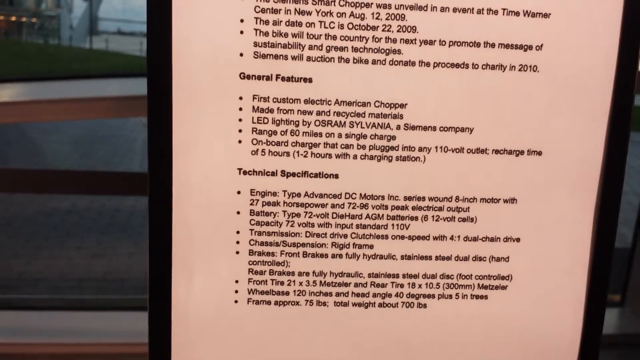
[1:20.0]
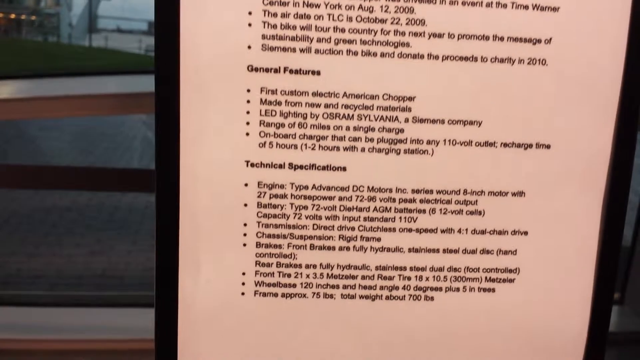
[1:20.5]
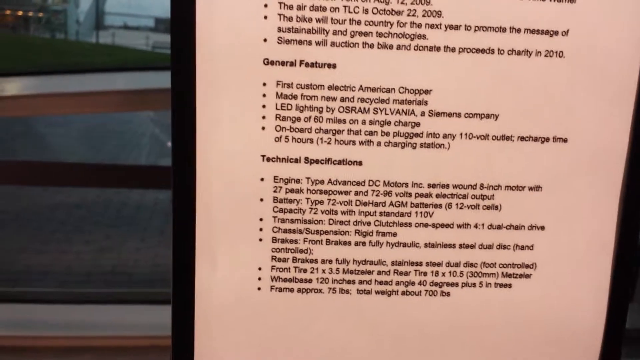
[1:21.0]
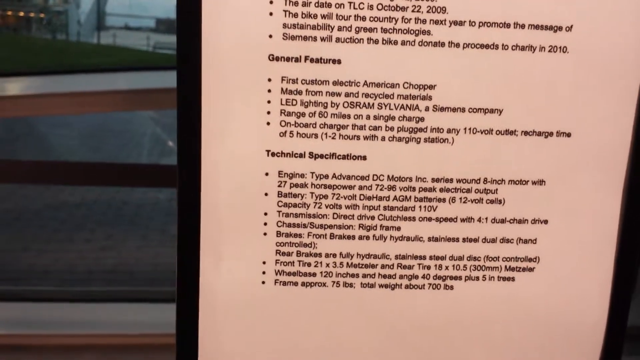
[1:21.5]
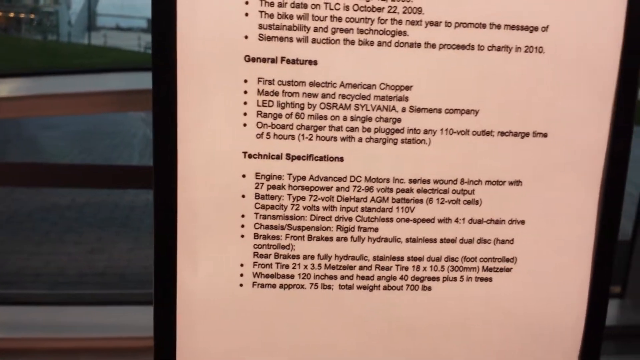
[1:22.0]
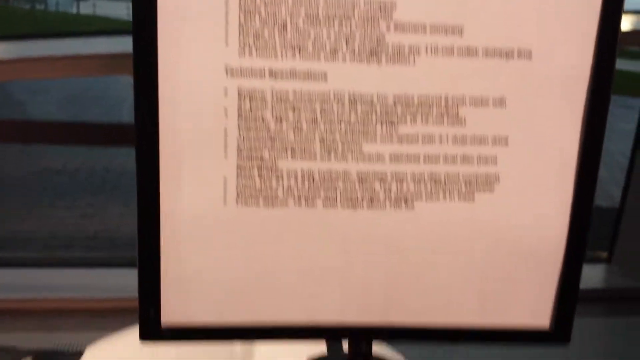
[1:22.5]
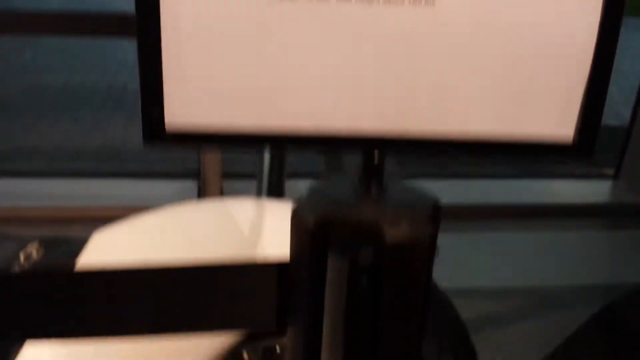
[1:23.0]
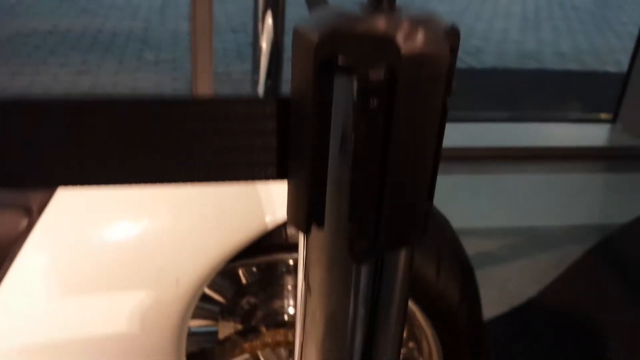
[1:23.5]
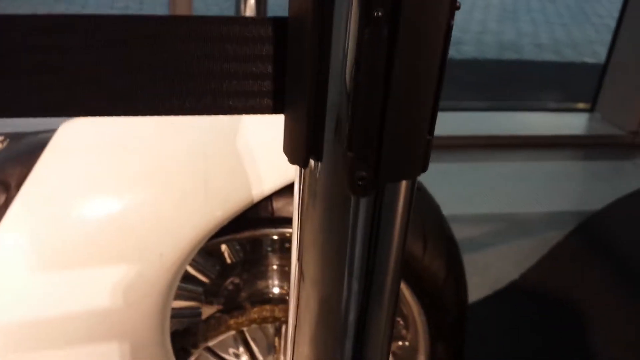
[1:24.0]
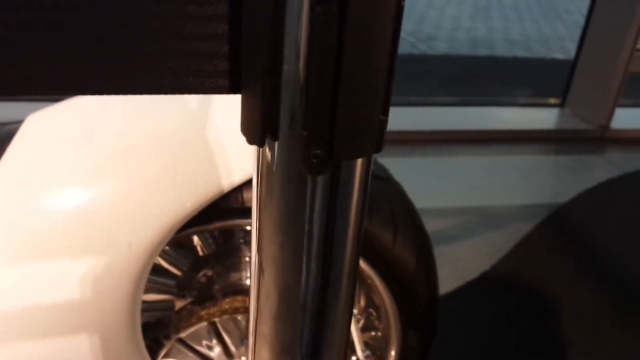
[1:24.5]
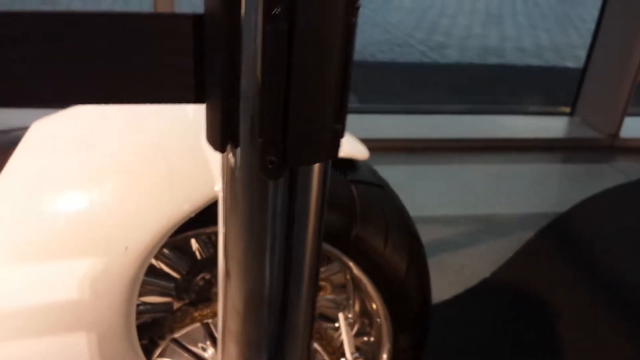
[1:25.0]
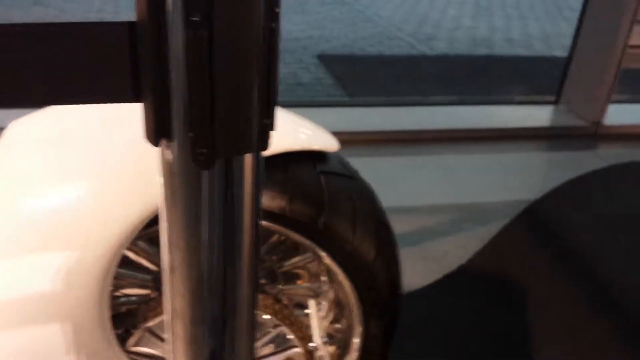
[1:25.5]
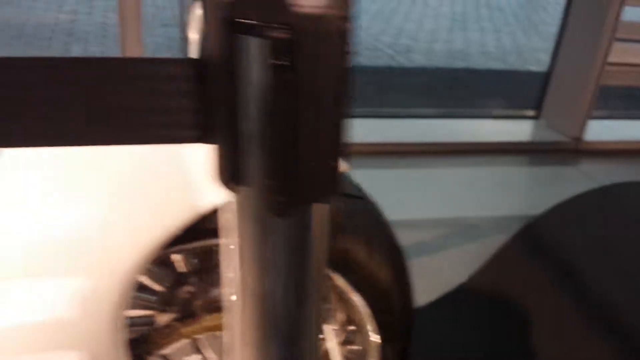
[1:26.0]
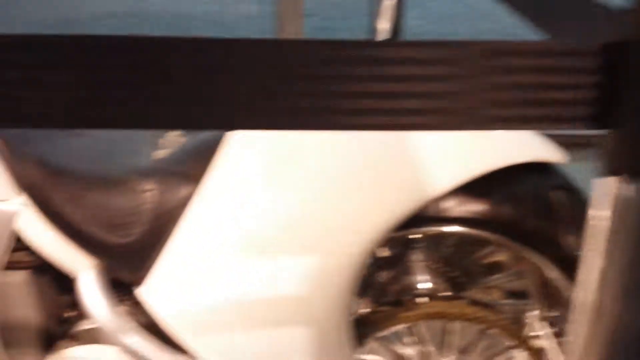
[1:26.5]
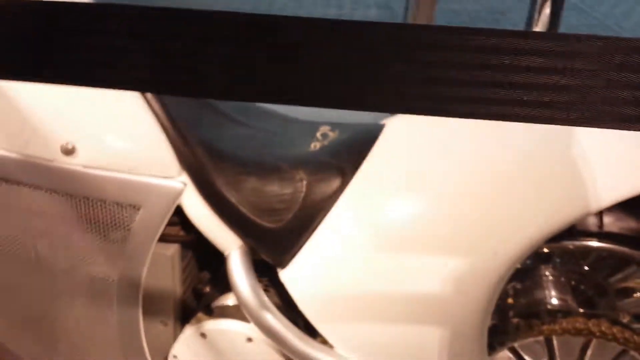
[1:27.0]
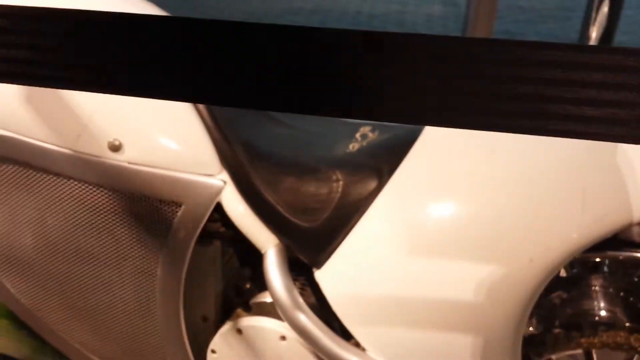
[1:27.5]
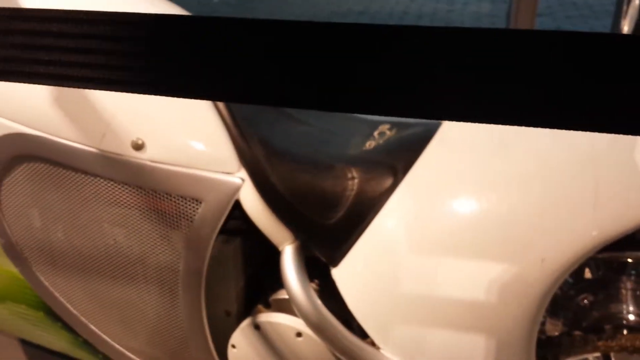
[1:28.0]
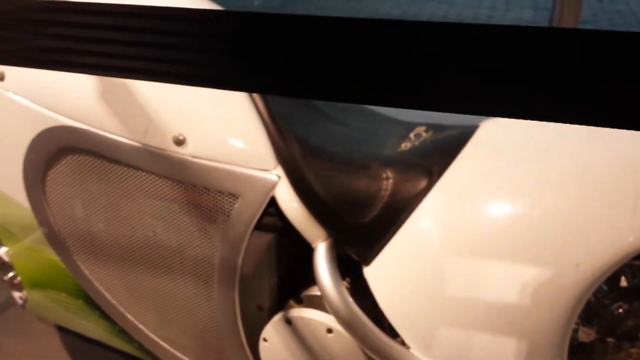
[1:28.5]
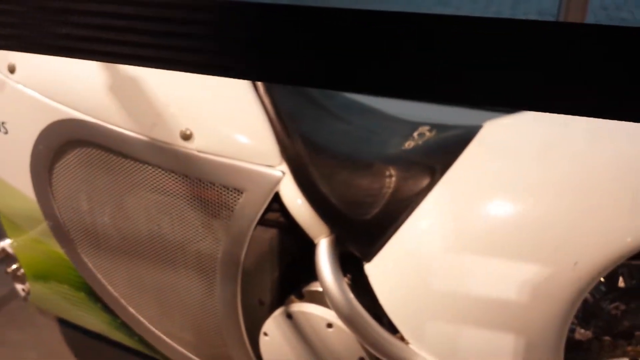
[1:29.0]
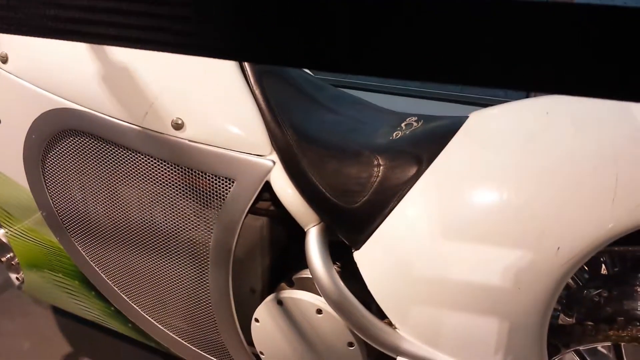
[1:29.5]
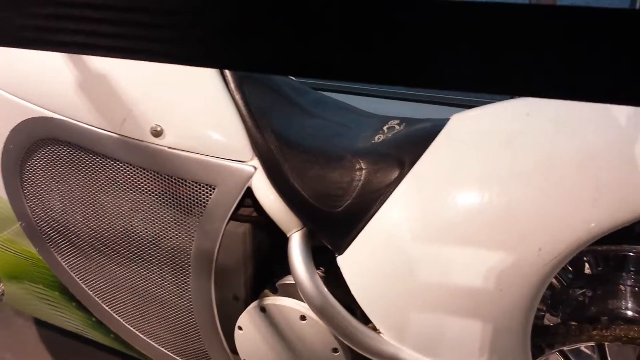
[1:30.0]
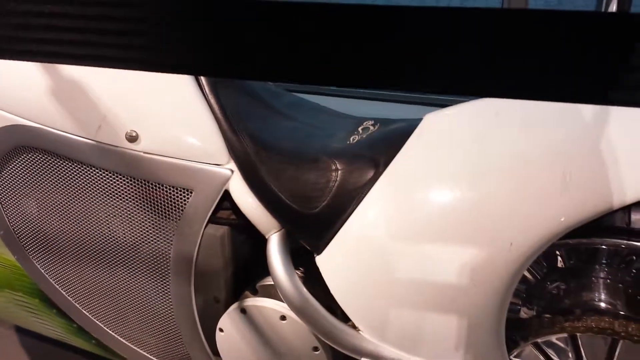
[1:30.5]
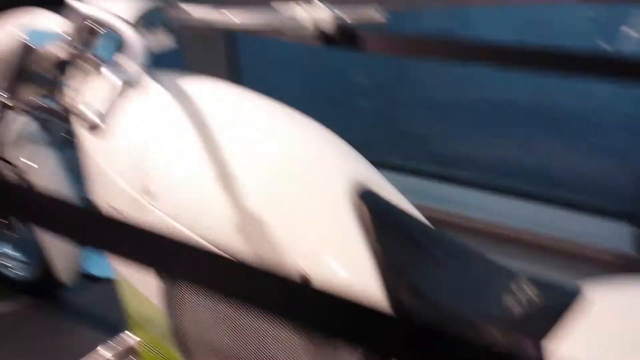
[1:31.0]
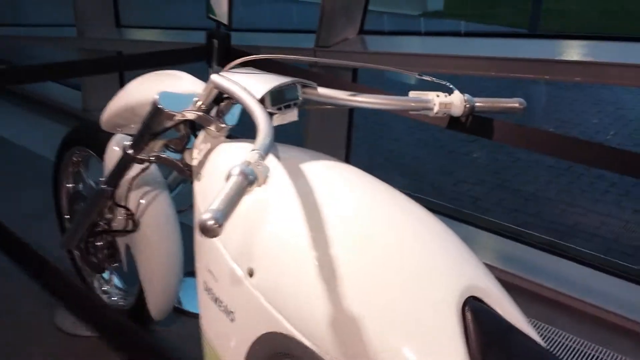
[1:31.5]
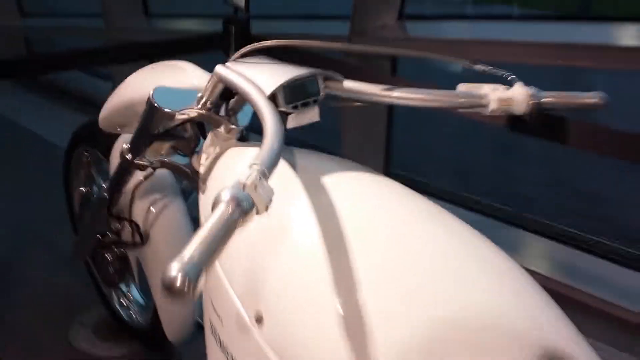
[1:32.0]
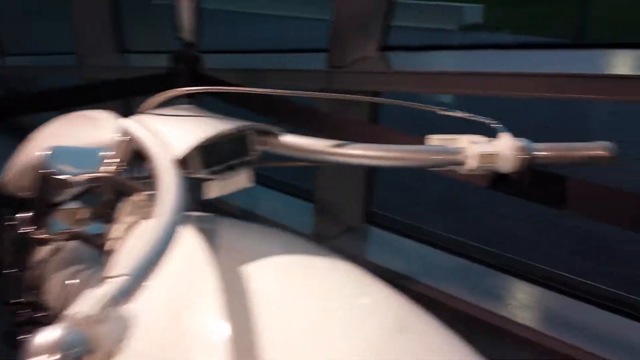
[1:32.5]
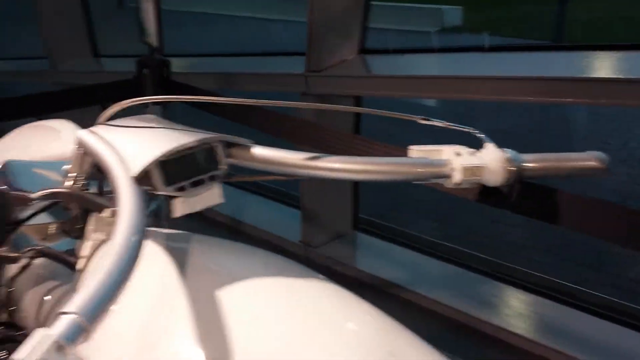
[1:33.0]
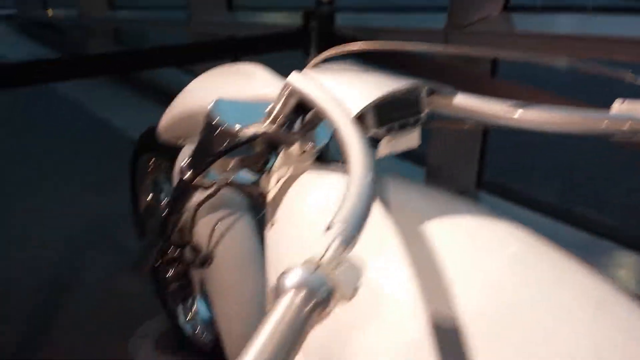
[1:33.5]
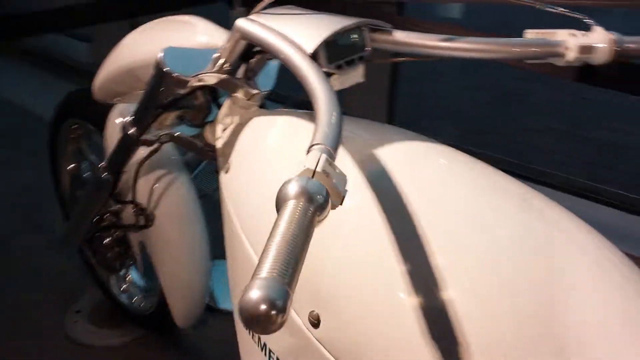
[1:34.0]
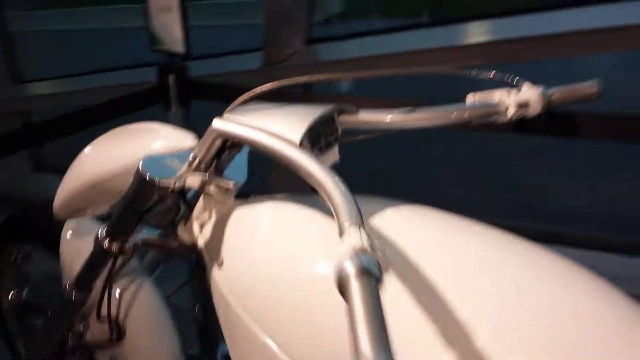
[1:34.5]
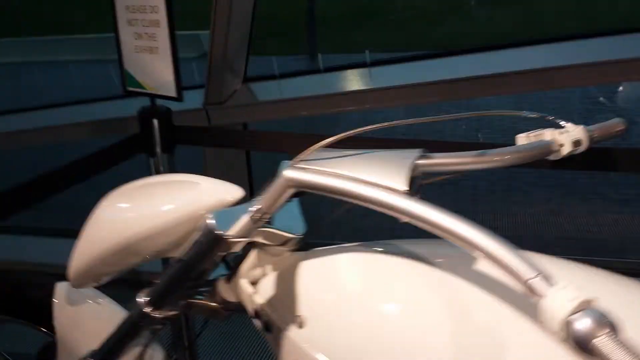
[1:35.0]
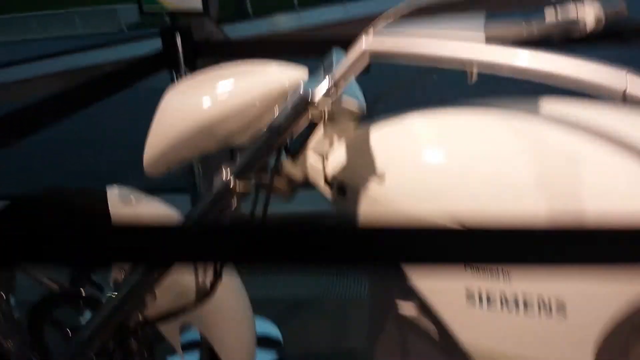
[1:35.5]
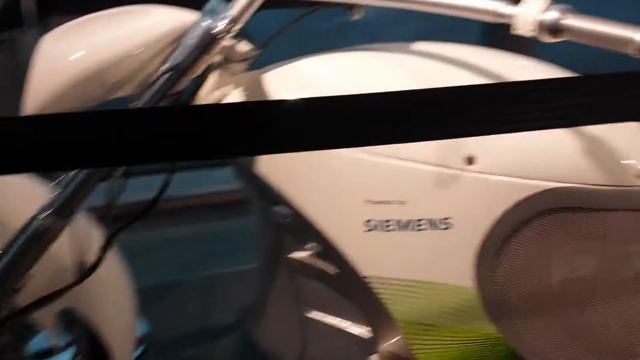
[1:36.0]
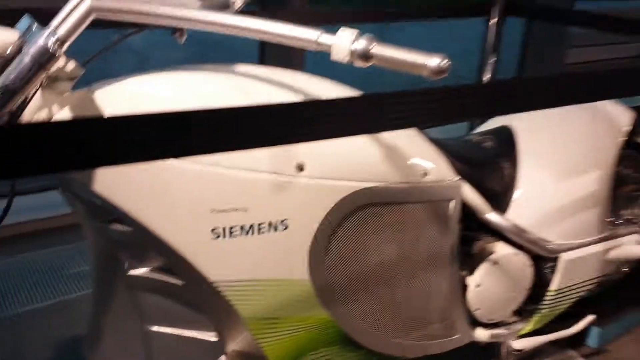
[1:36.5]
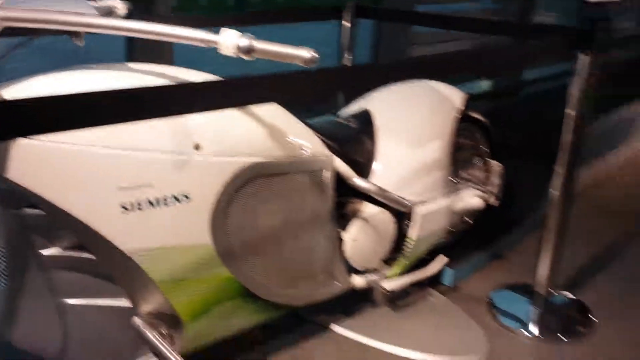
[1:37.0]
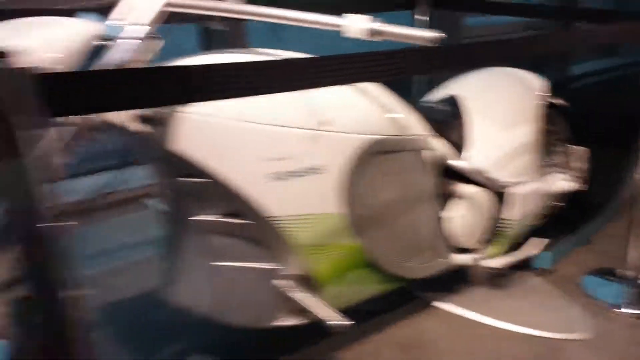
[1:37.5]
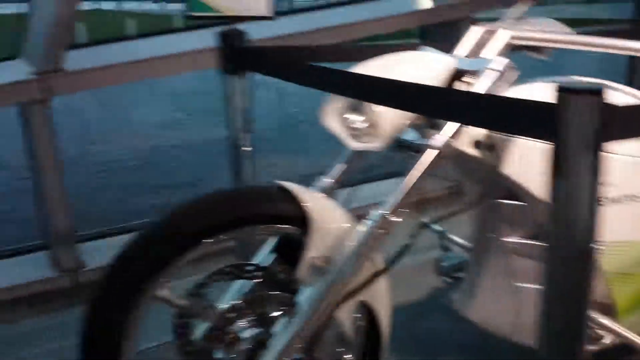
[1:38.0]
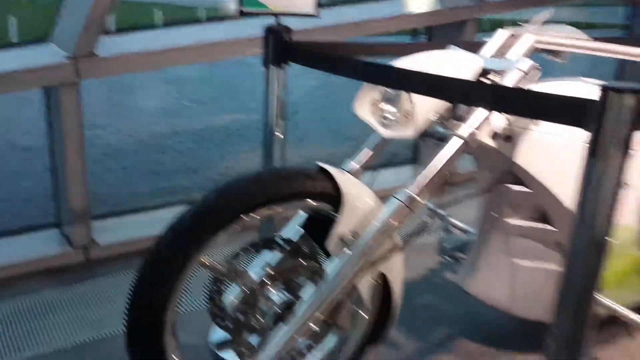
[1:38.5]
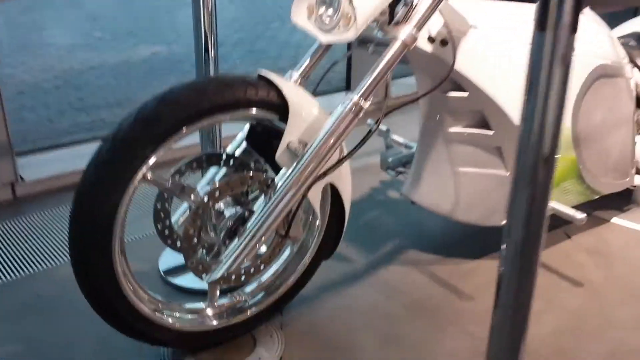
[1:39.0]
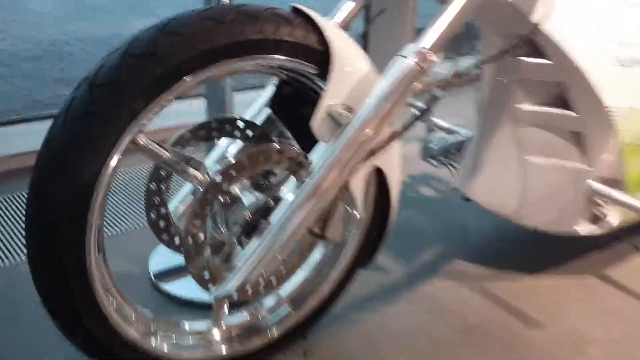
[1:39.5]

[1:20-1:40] A white piece of paper with information about a motorcycle sits in a black frame. The camera scrolls down to the bottom until the back of the motorcycle is visible behind the stand the paper is on: a black tire with a silver rim. The camera pans left to show the body of the motorcycle, mostly white and made of fiberglass, with a black leather seat. Continuing left, it shows a vent with a gray outline underneath the seat toward the front. The camera shakes up and down, then quickly goes up and zooms into the handlebars, showing the spot directly between where they come together, where there looks like a digital readout of some kind. A silver cable runs from the front of the bike up over one of the handlebars to the end of the handlebar on the right side. The camera goes back to the front of the bike, down to the front tire, back to the body, and back to the front tire, where the headlight is visible facing right. It then goes down for a close-up of the front tire.